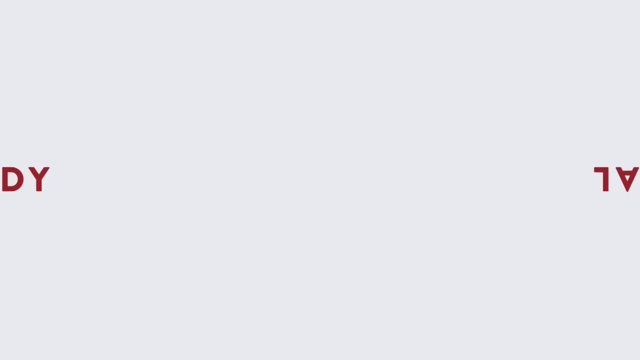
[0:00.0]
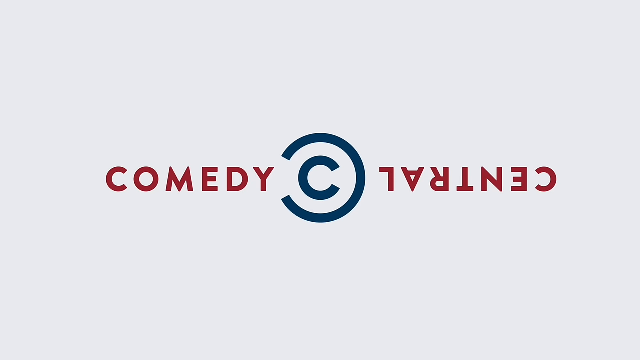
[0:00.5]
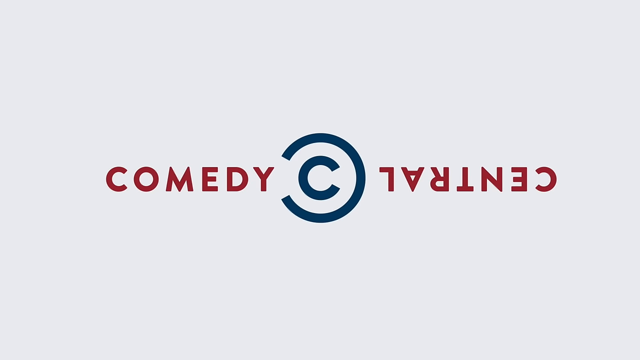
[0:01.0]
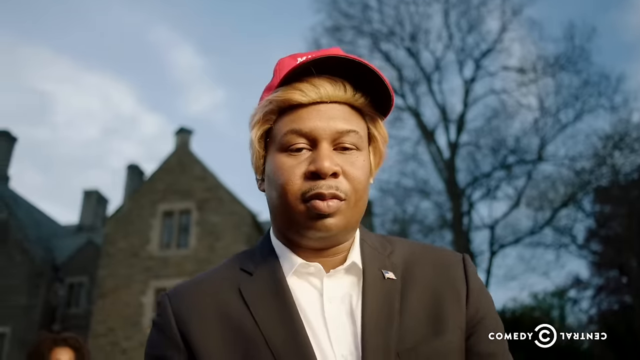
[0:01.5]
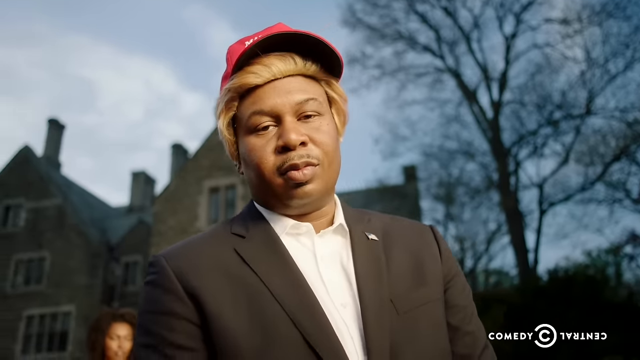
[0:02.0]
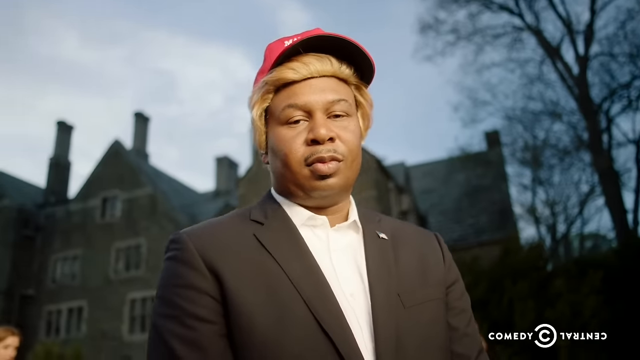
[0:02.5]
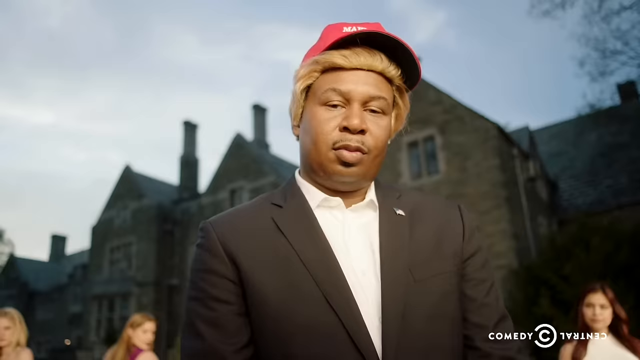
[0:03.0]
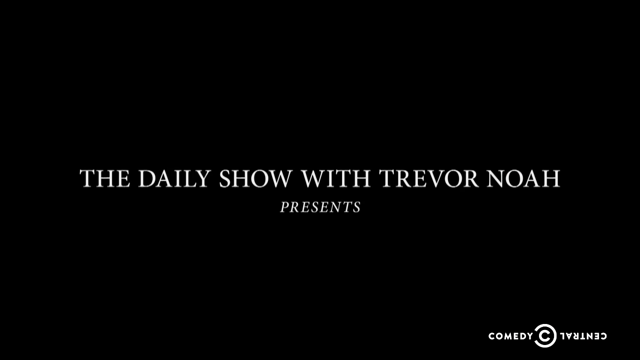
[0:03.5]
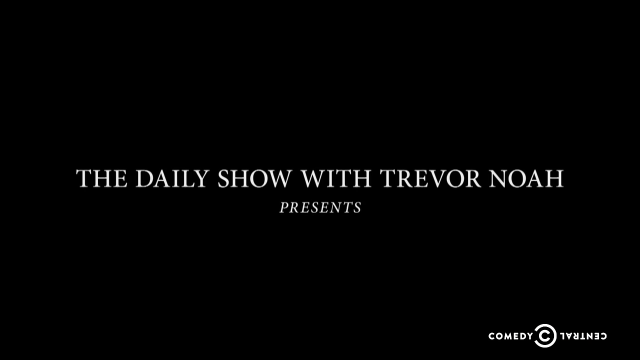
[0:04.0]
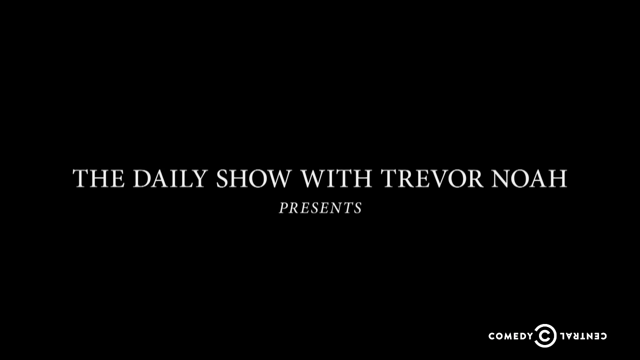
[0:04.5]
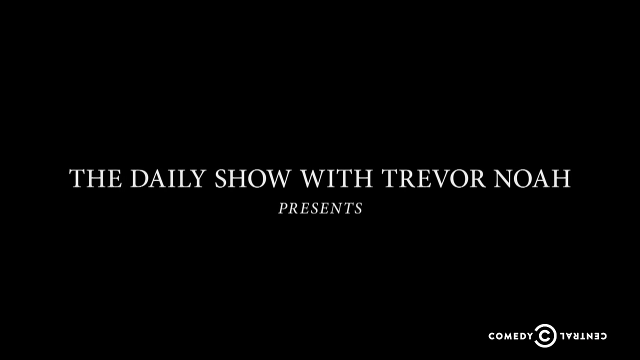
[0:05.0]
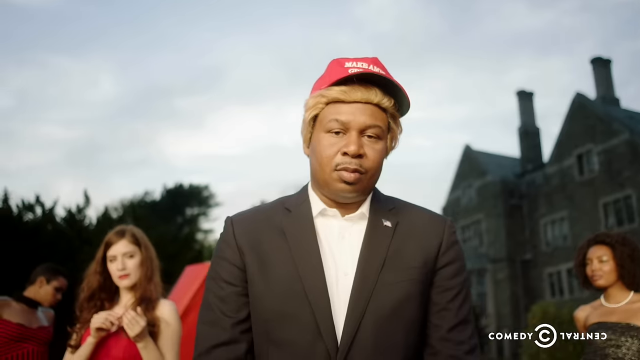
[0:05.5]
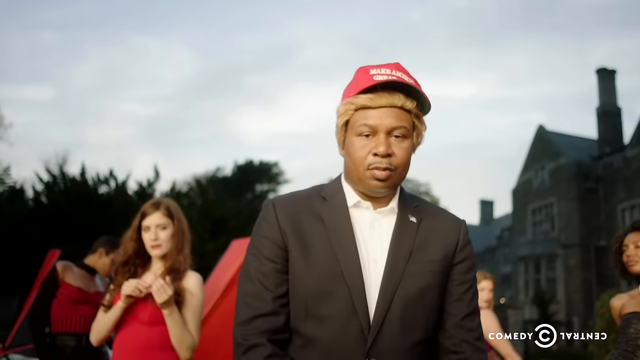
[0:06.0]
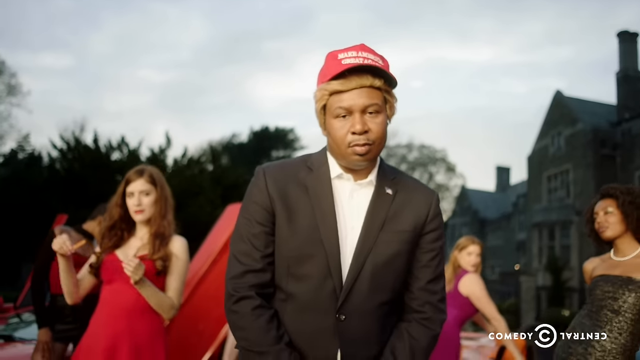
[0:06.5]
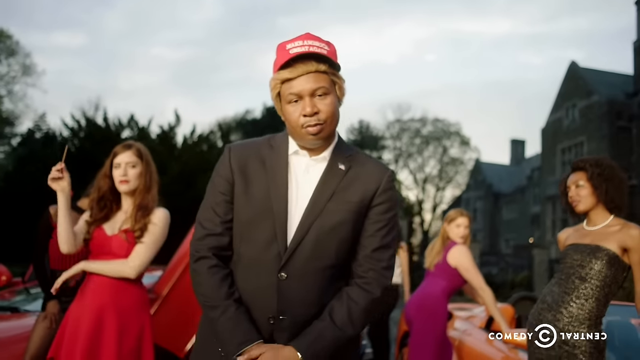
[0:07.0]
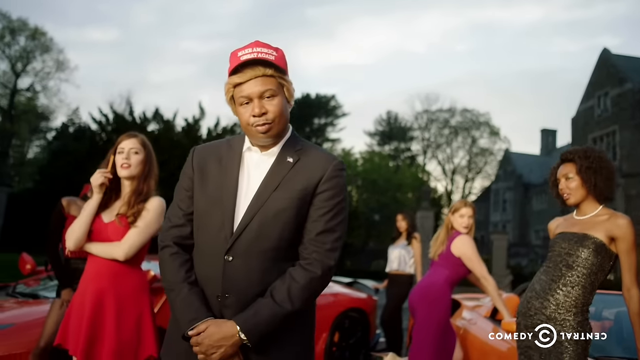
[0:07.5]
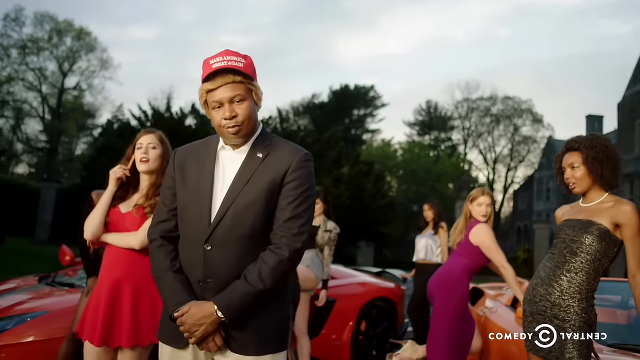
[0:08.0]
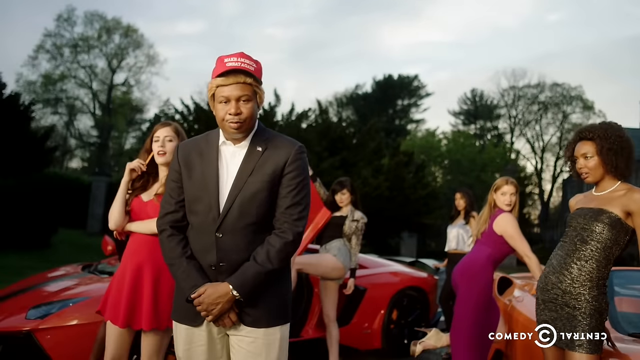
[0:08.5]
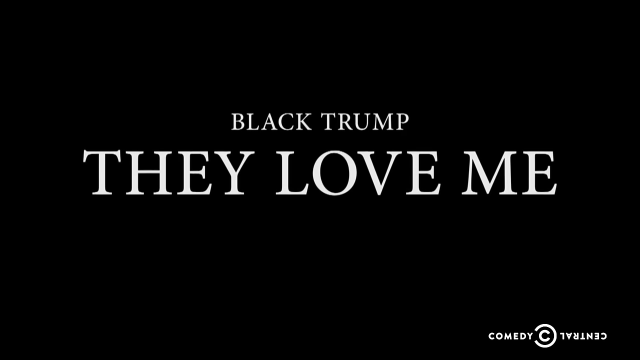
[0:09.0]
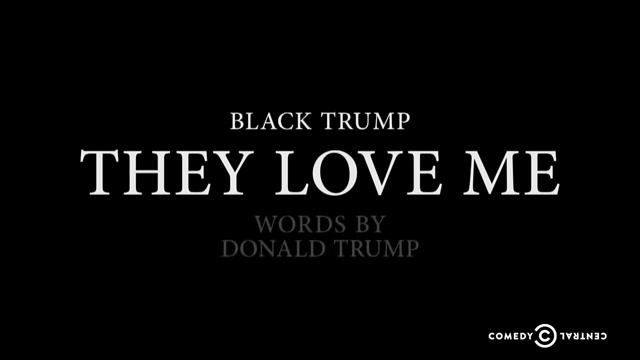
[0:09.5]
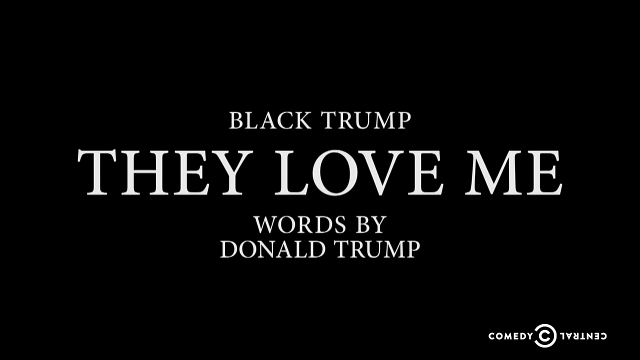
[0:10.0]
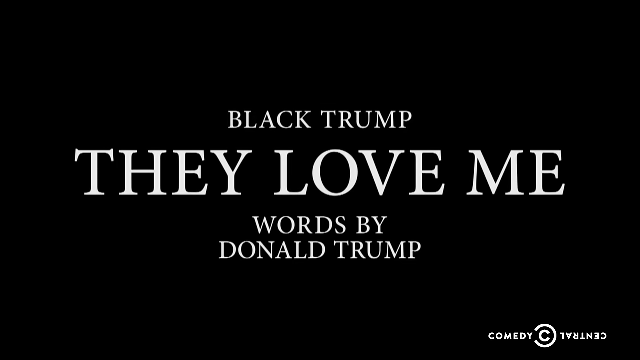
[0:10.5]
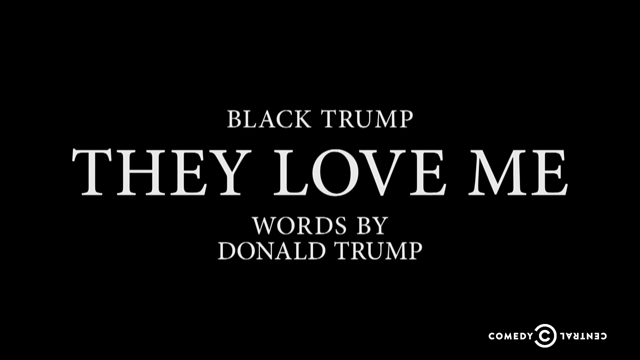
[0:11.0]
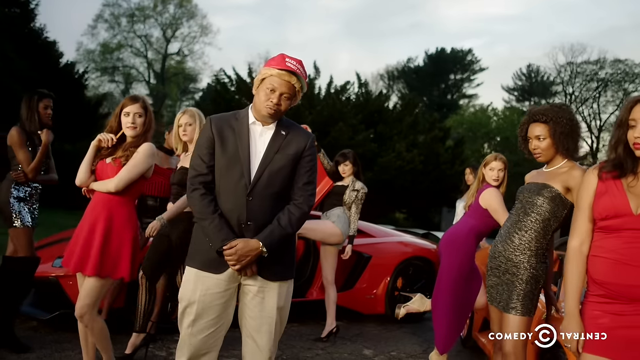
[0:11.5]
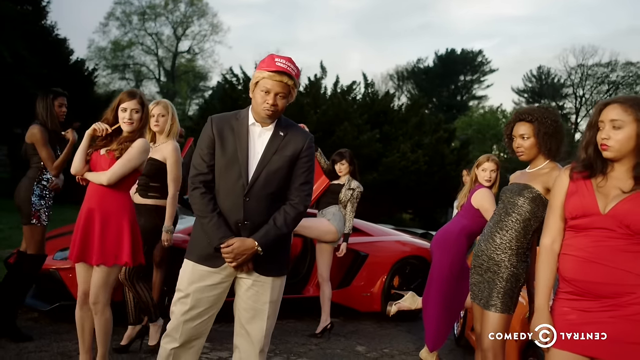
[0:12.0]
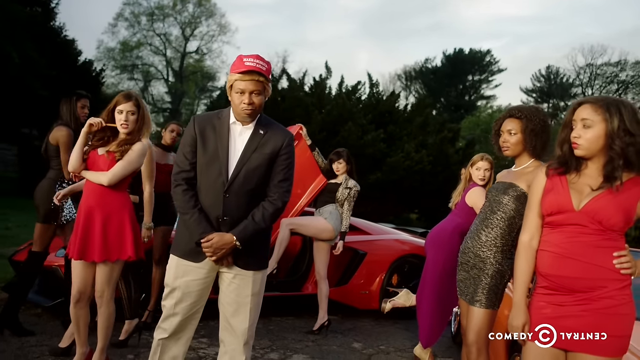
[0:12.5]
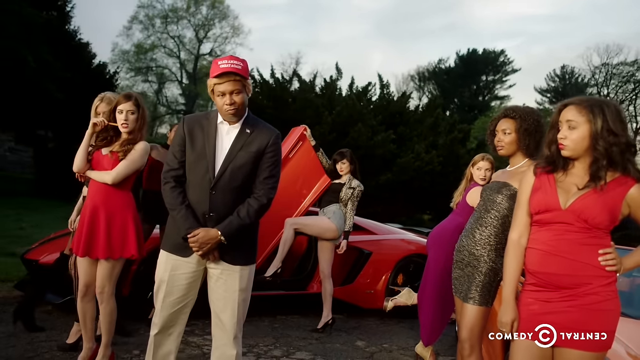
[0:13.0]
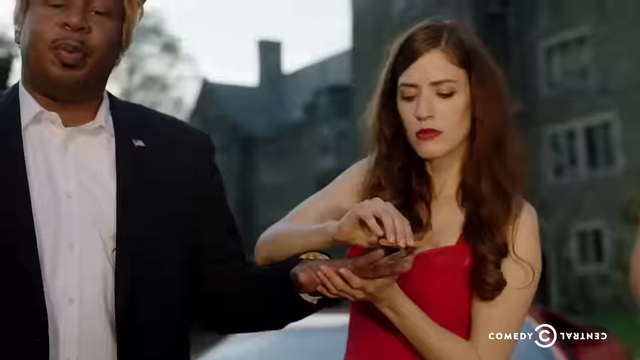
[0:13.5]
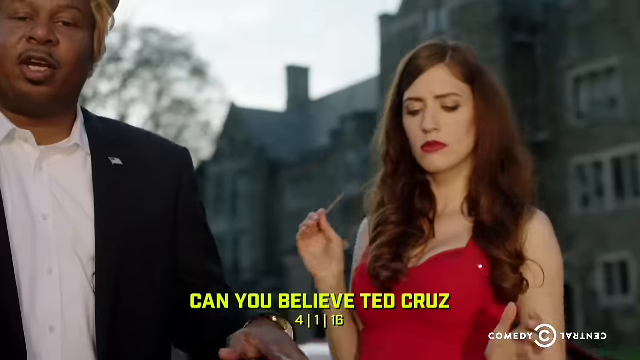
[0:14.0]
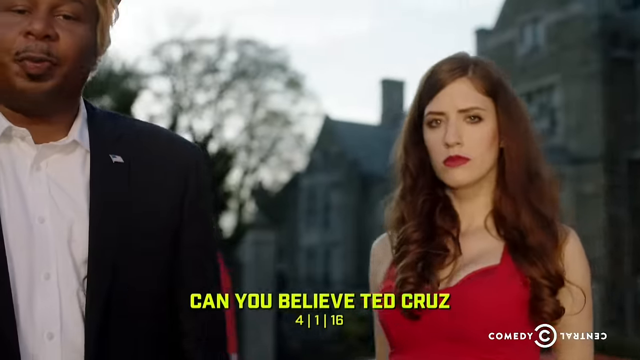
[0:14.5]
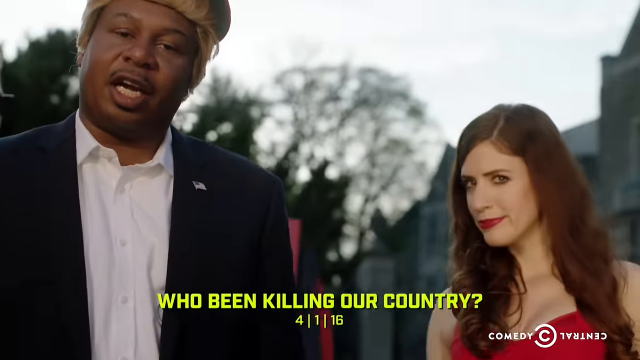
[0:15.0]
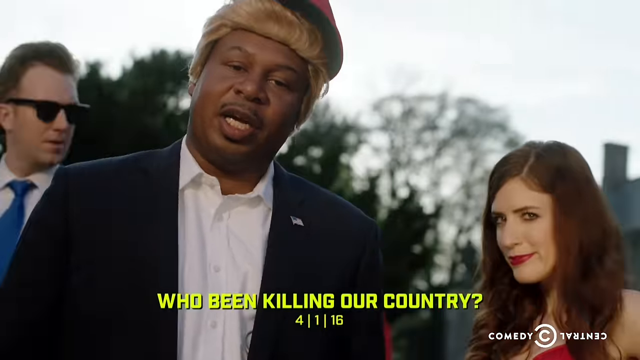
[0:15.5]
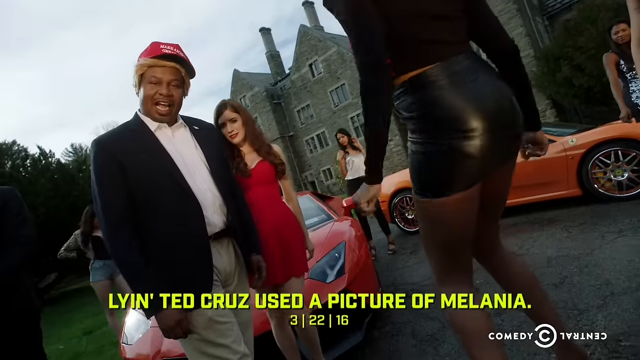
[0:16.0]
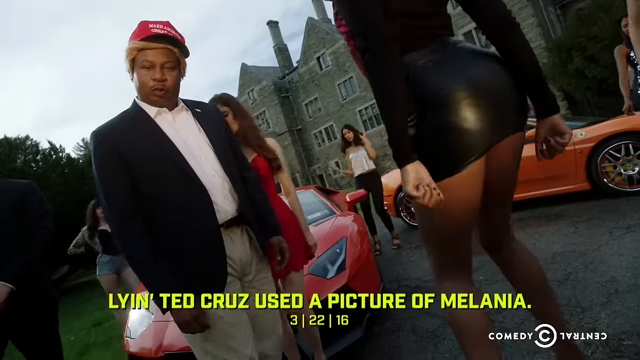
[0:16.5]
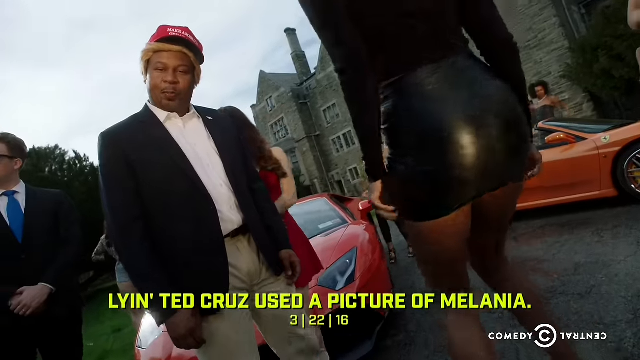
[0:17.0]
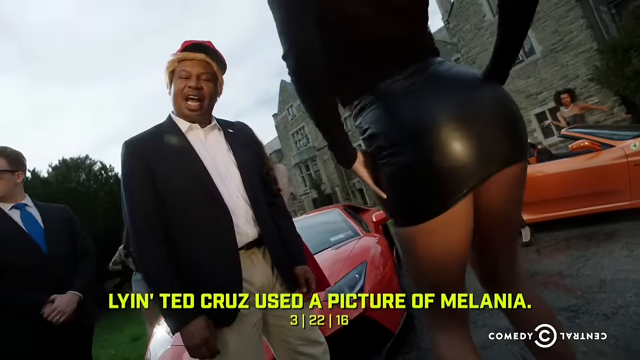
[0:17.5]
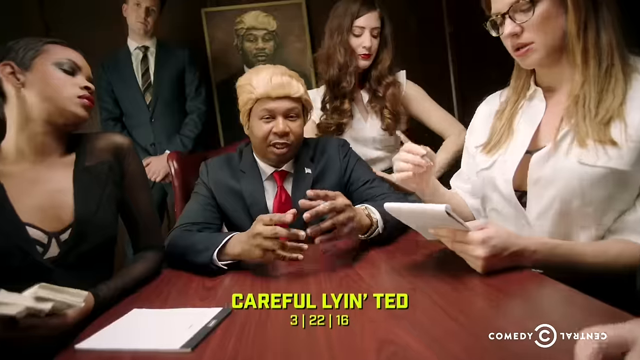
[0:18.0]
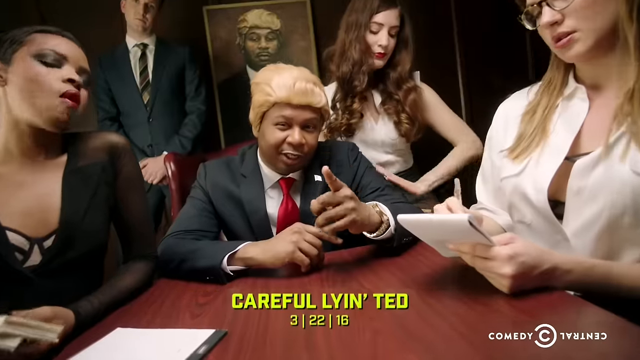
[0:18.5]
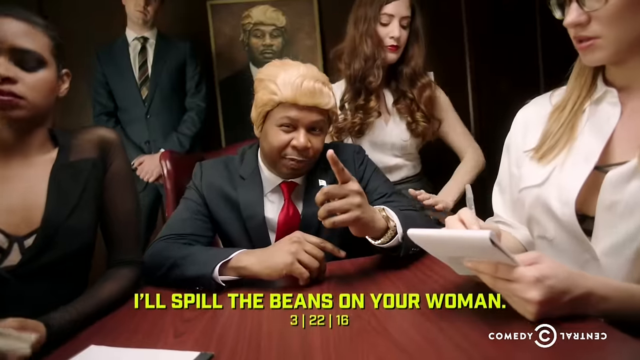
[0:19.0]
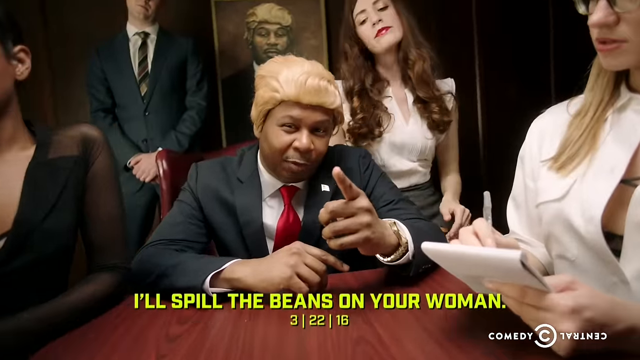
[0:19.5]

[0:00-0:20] The video opens with what appears to be the Daily Show with Trevor Noah, apparently showing a host doing a parody of Donald Trump under the label "Black Donald Trump." He appears to be rapping, in a setting that seems to be in the UK, with a large brick mansion behind him, exotic cars that appear to be Lamborghinis, and several women of different races. The women appear to be in dresses; some appear to wear skirts and blouses, while others wear a bodycon or mini dress. Black Donald Trump appears to be wearing khaki pants and a black, bluish coat with a white undershirt, and he appears to have blondish hair similar to Donald Trump's. As the video pans, several trees are in the background, along with what appears to be a bodyguard, a white-skinned male wearing dark blue glasses.